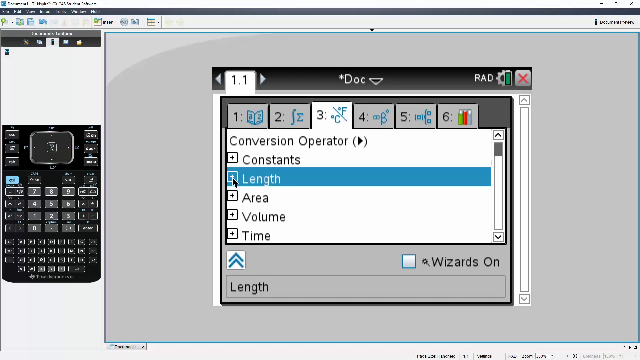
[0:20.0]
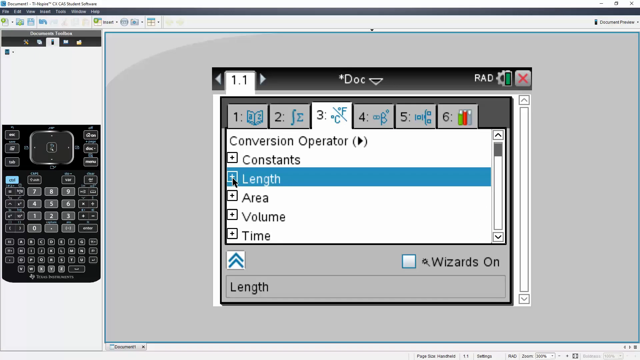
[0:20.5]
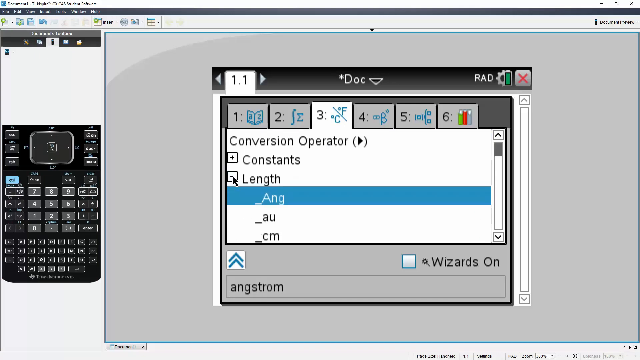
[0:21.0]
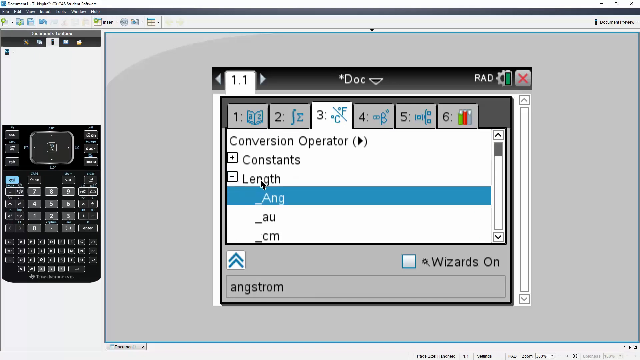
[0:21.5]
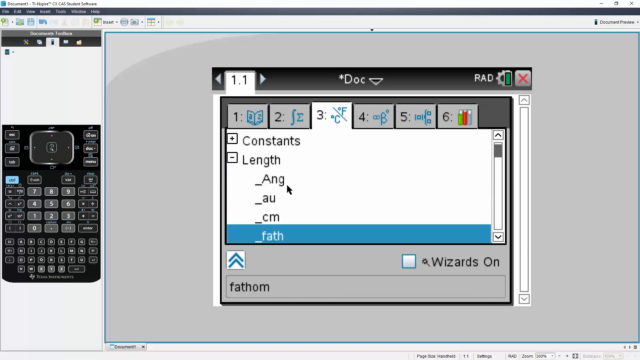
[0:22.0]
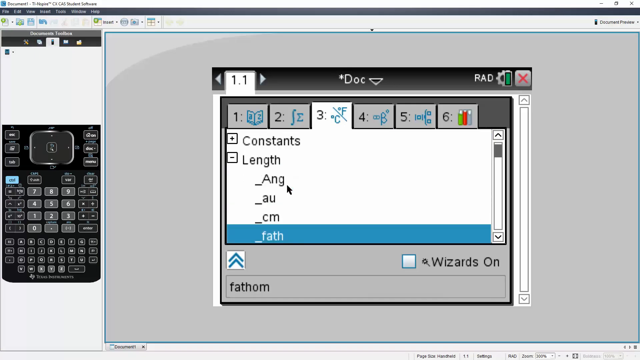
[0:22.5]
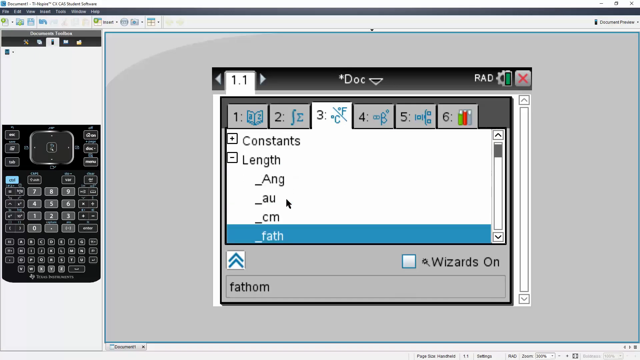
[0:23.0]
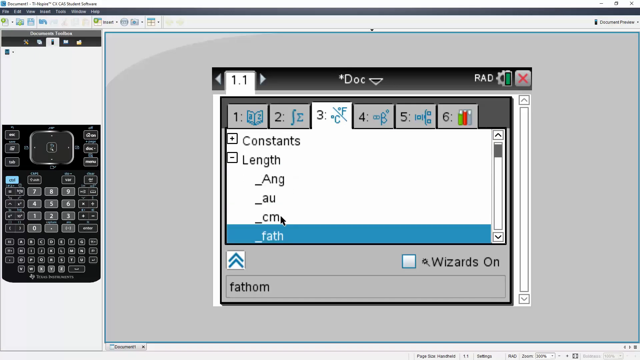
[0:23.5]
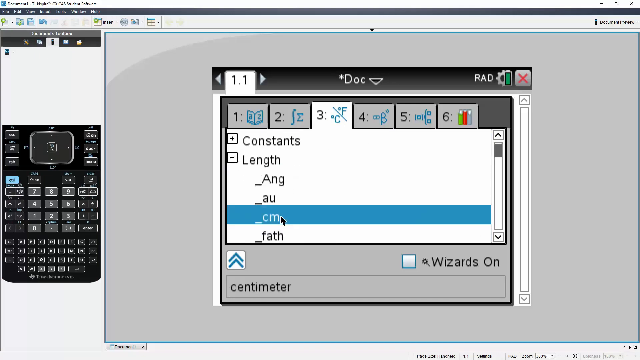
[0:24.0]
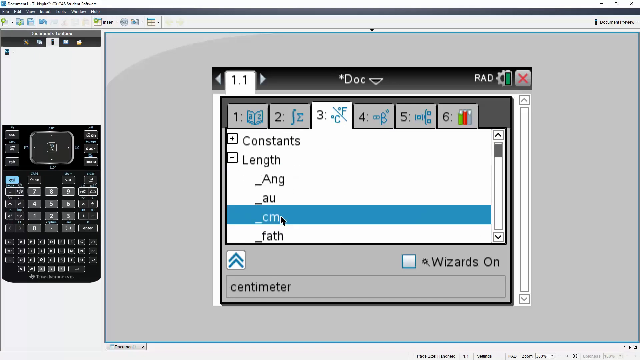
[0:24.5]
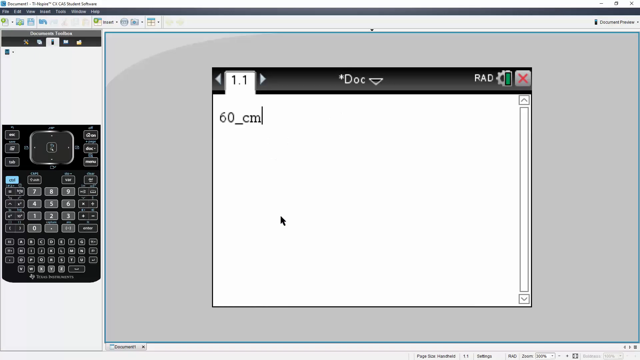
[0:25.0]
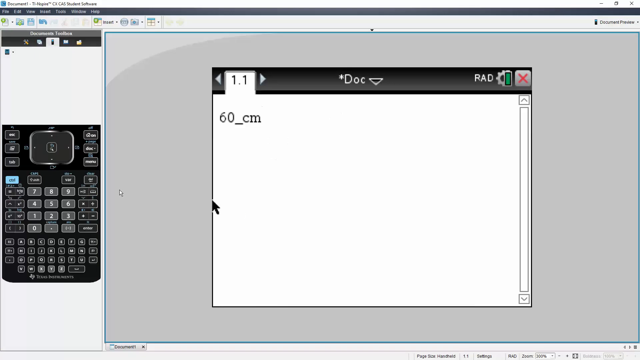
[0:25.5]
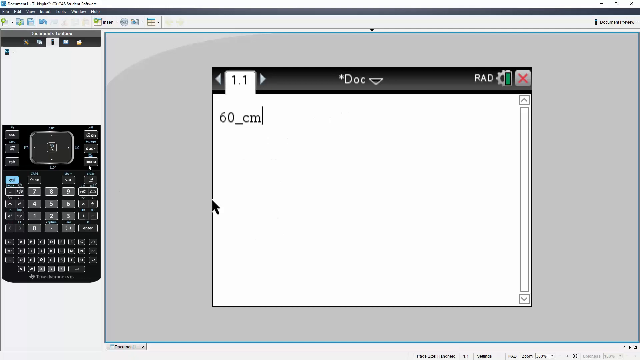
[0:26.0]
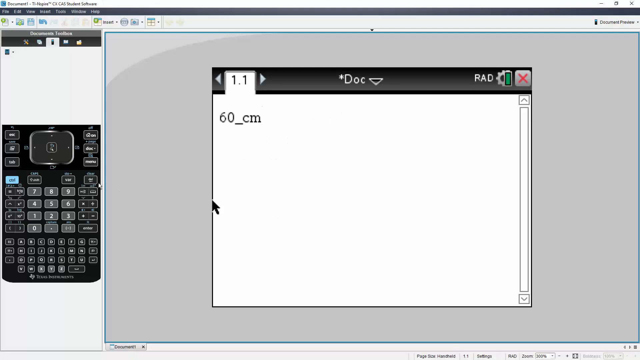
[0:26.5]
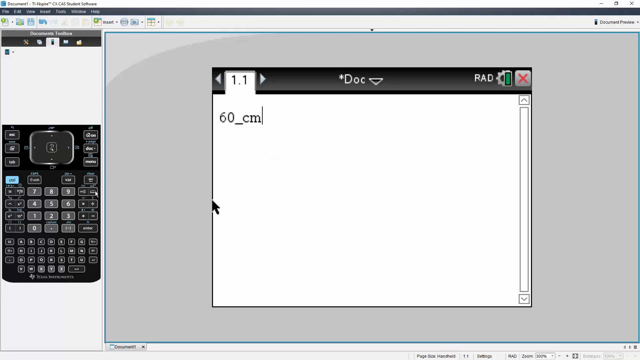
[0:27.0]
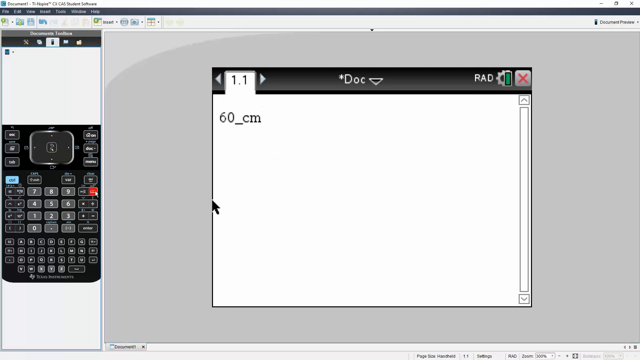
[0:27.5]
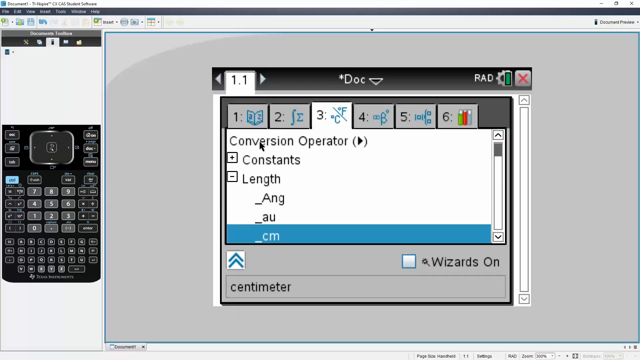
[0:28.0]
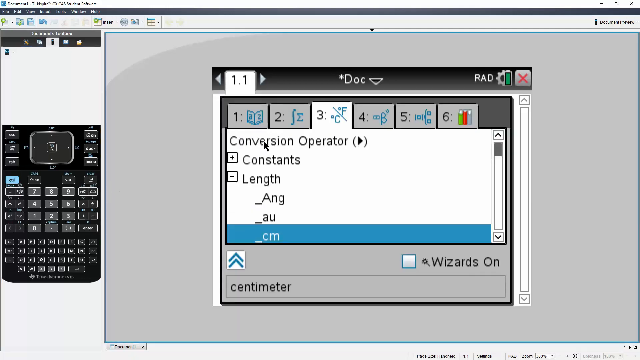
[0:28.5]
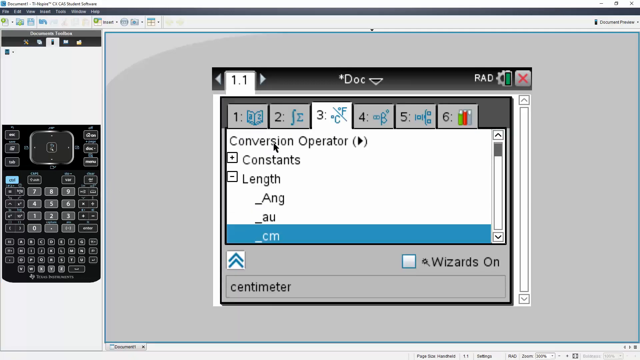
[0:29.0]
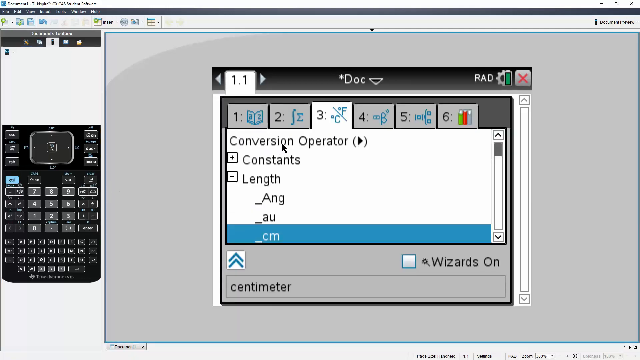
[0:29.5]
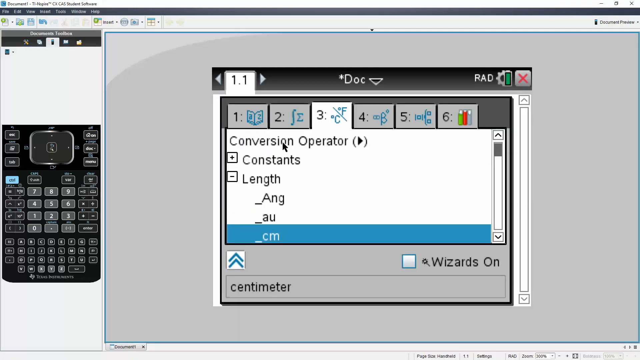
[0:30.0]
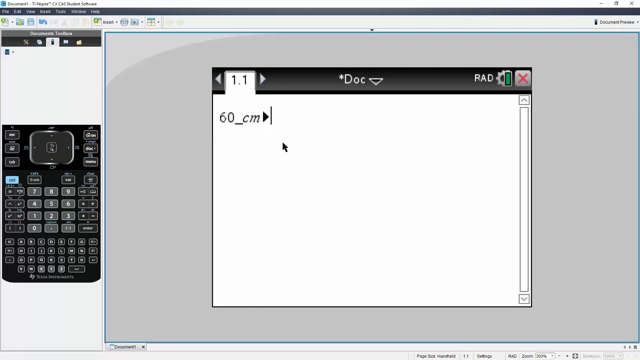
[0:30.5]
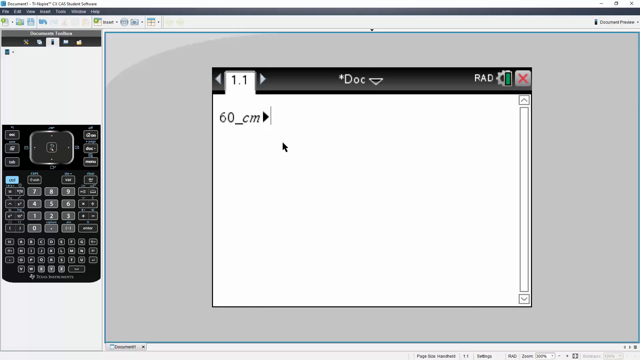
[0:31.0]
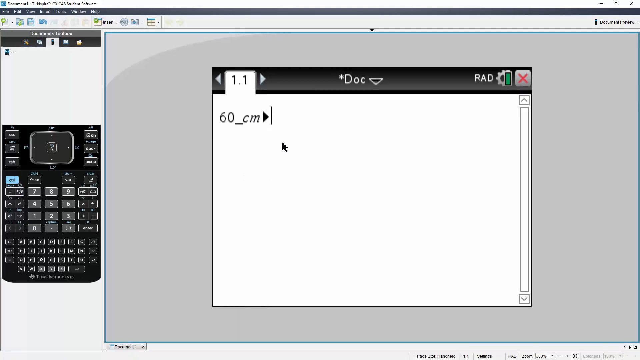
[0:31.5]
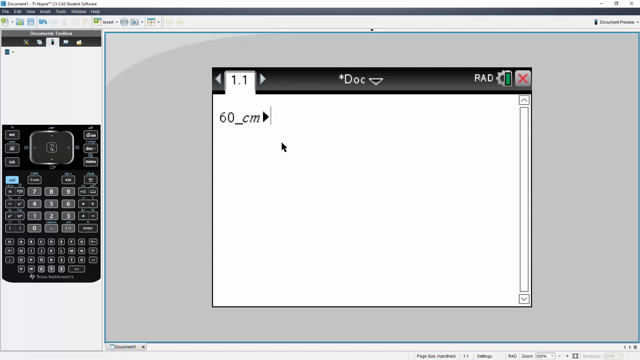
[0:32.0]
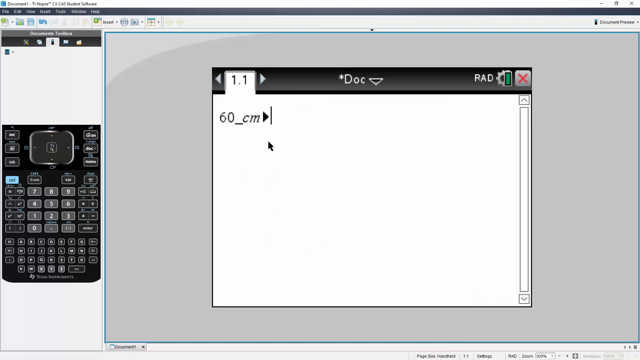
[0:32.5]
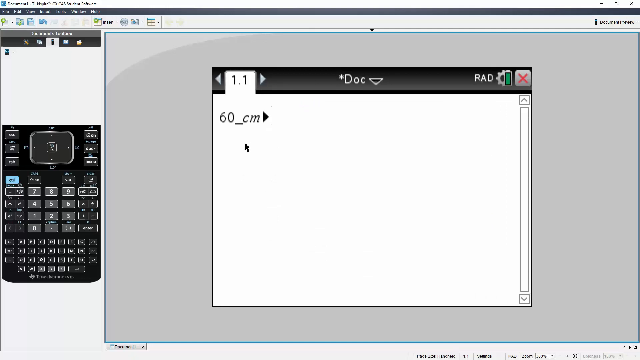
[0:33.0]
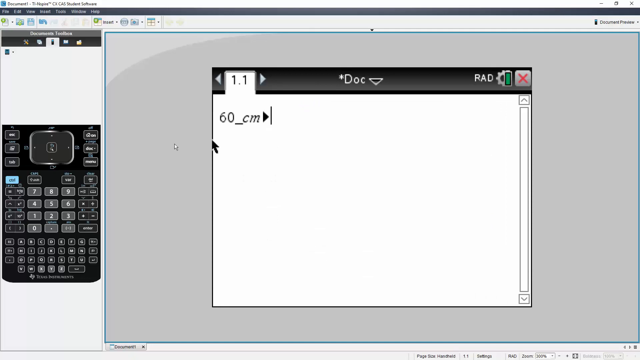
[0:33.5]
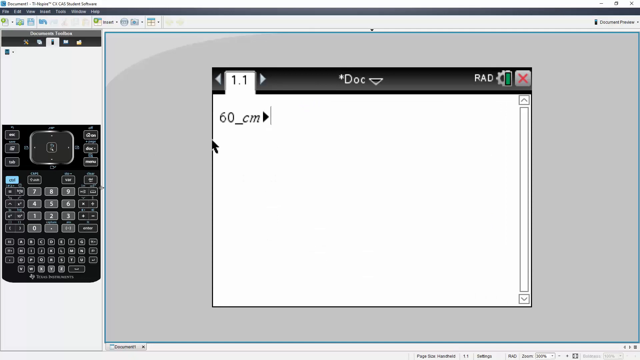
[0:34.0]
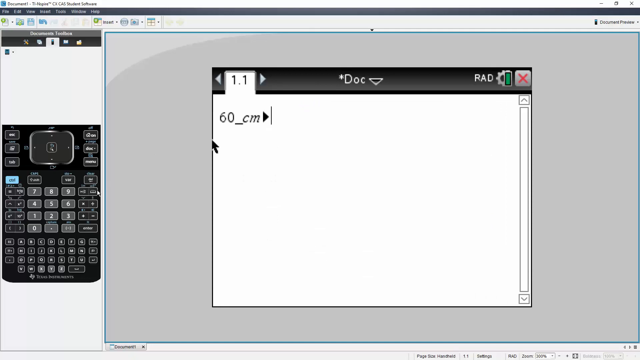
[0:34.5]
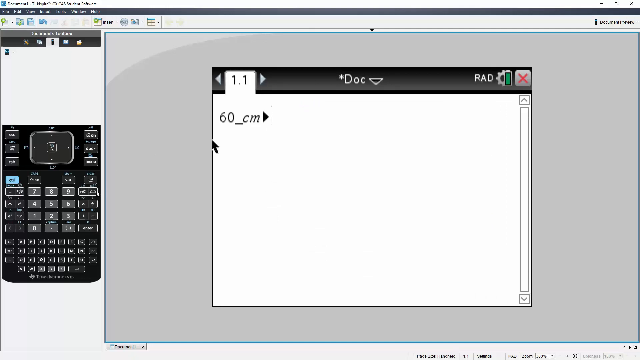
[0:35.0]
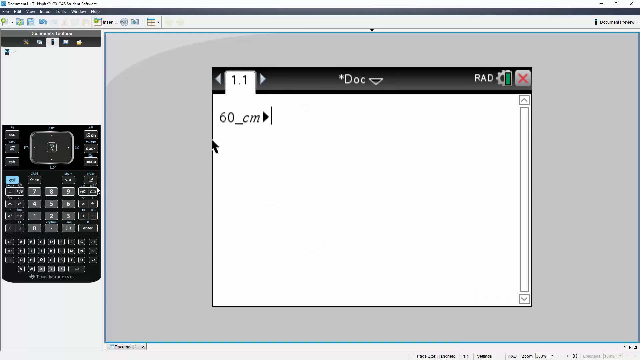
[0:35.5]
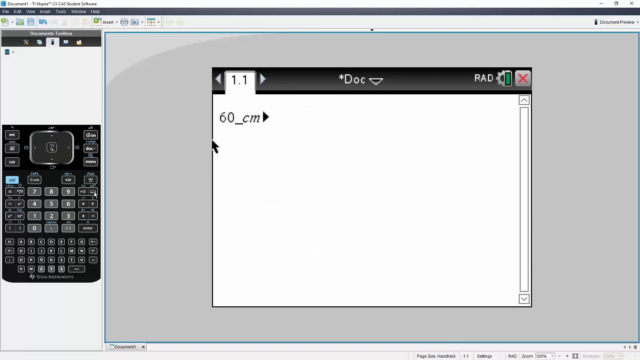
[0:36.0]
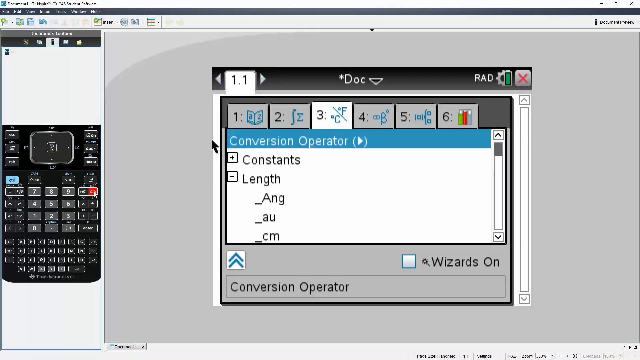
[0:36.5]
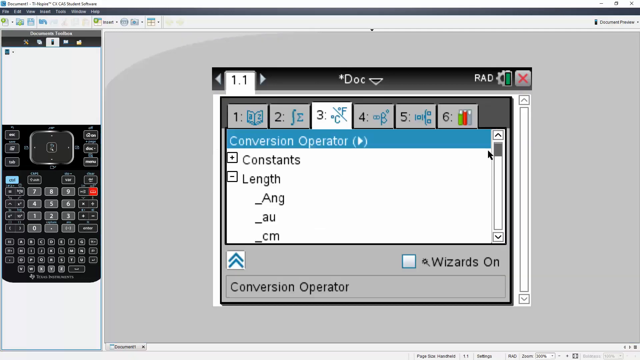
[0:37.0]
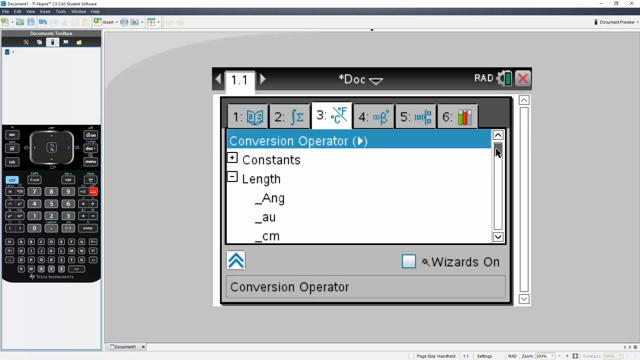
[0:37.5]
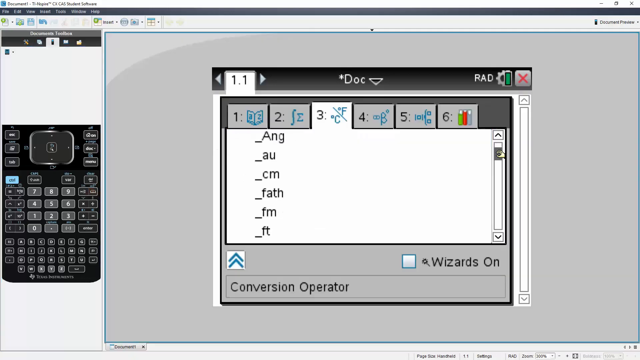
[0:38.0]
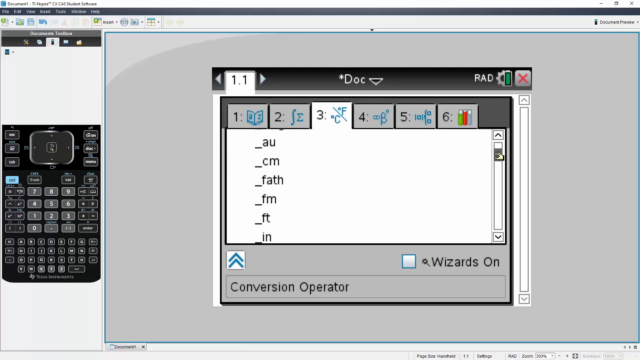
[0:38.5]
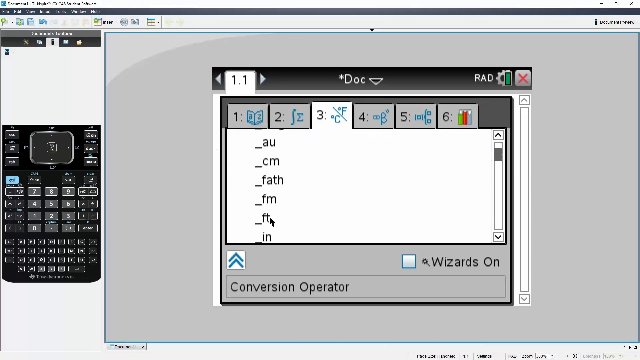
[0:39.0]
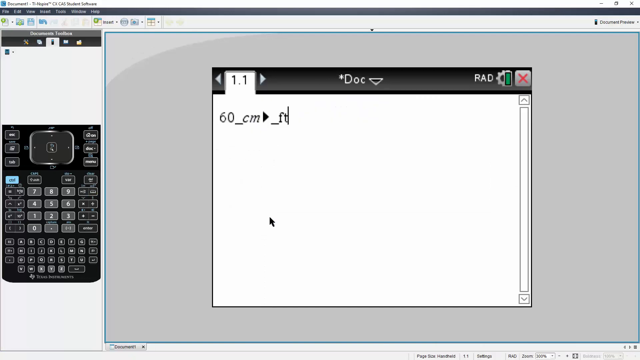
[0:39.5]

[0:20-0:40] Under the dock are six options across, and underneath them it says "conversion operator", followed by constants, length, area, volume and time. Length is highlighted blue. Clicking on it pulls up more options underneath, and cm, for centimeter, is clicked. It now says "60_centimeter". The arrow moves over and clicks a button on the calculator, which brings up the conversion operator on the right side. Clicking on Conversion Operator puts an arrow pointing to the right. The Conversion Operator button on the calculator on the right side is clicked again, bringing it back up on the dock. Scrolling down to Feet brings it up next to it, so it now reads "60_cm", an arrow pointing right, then "_feet".